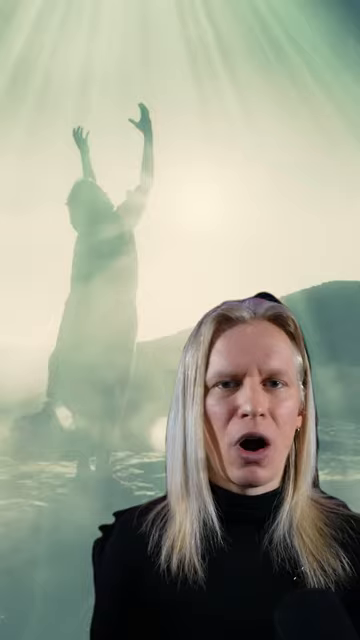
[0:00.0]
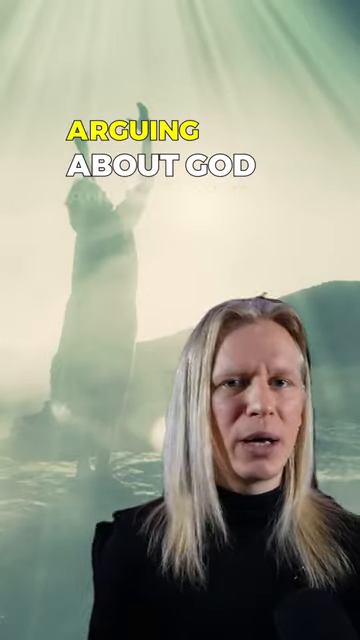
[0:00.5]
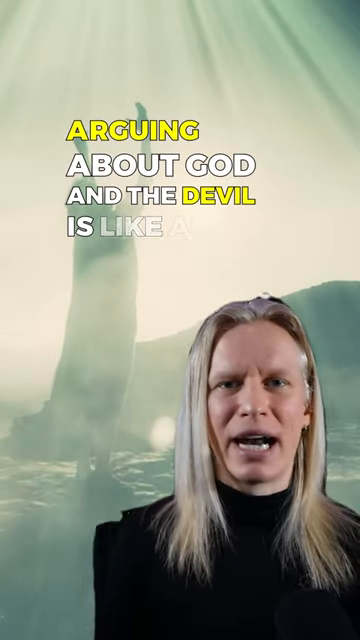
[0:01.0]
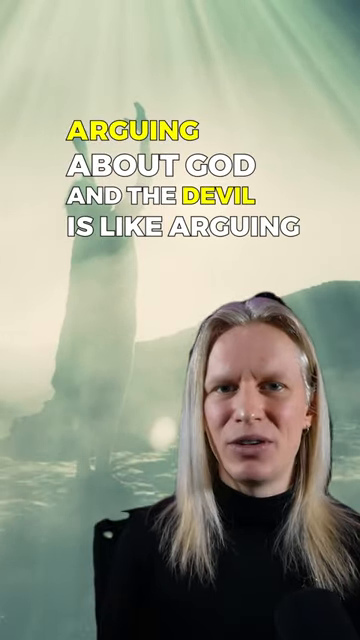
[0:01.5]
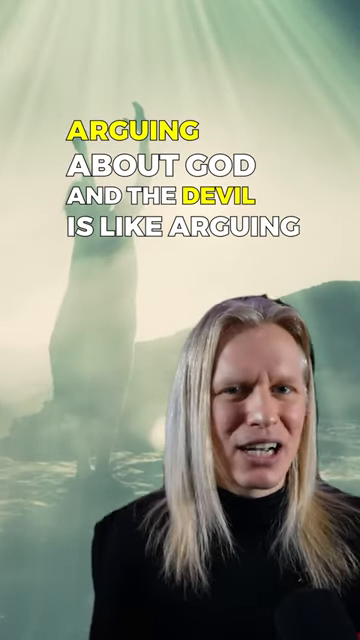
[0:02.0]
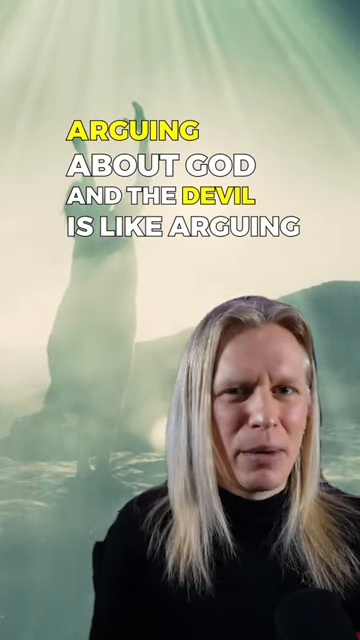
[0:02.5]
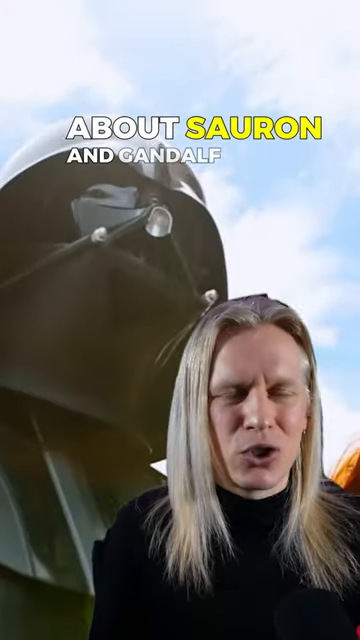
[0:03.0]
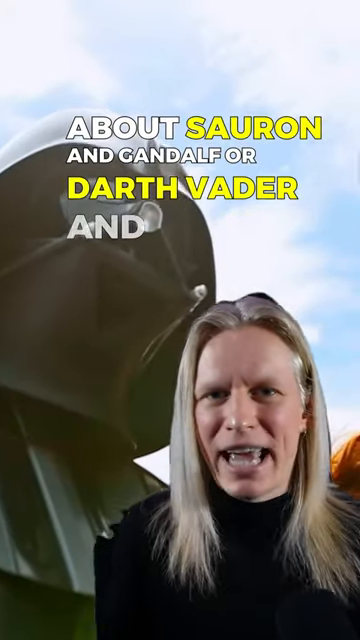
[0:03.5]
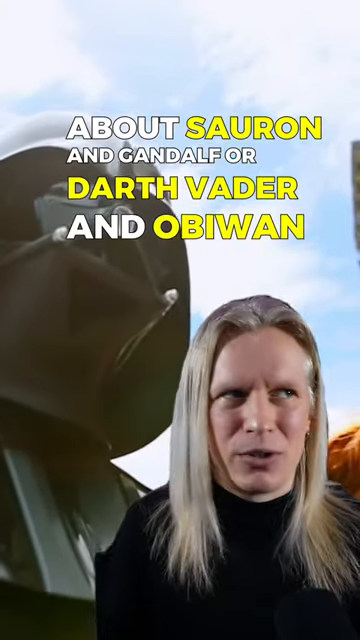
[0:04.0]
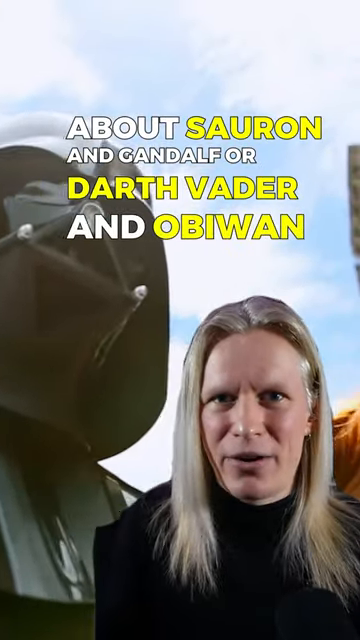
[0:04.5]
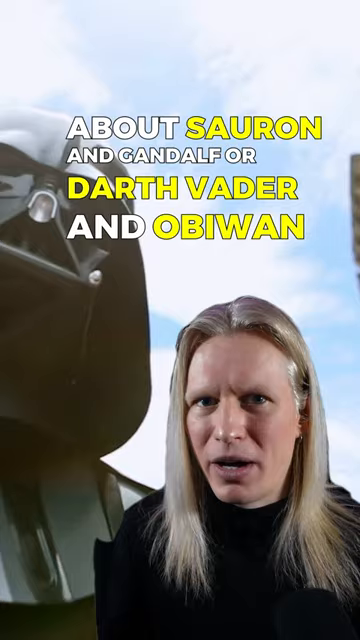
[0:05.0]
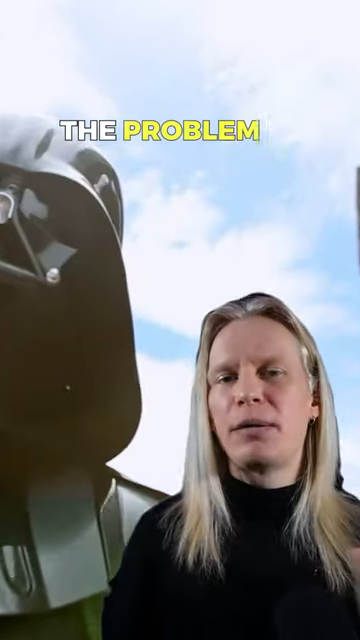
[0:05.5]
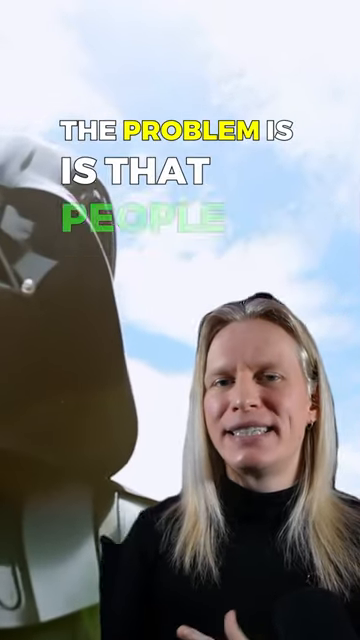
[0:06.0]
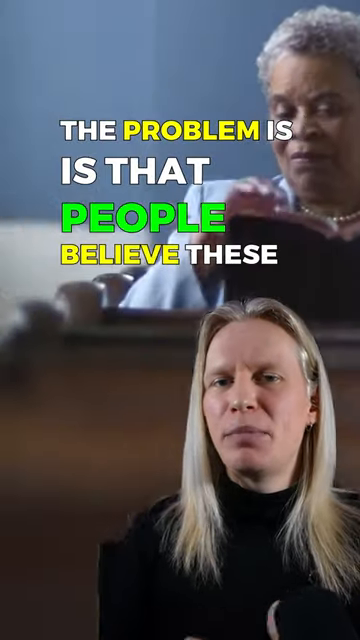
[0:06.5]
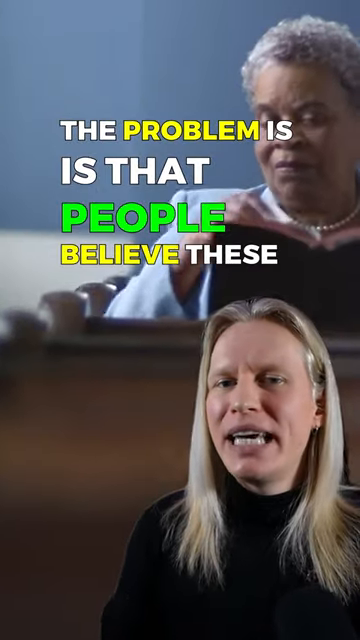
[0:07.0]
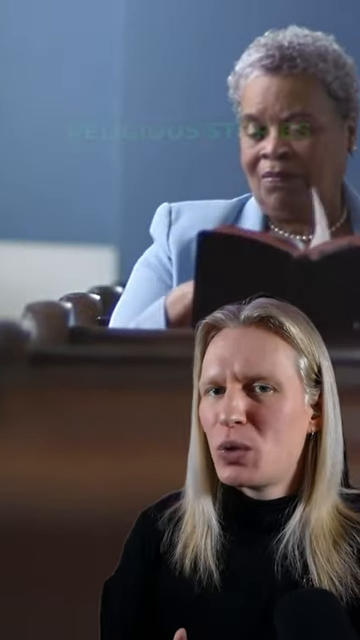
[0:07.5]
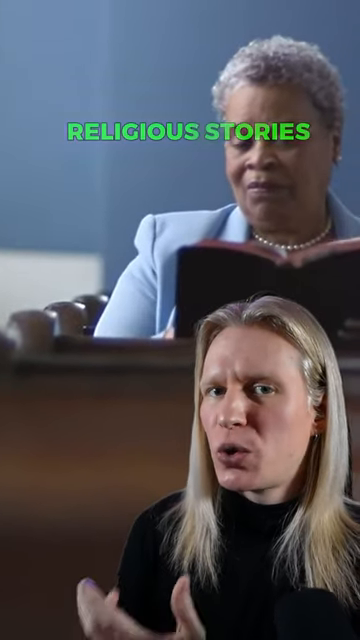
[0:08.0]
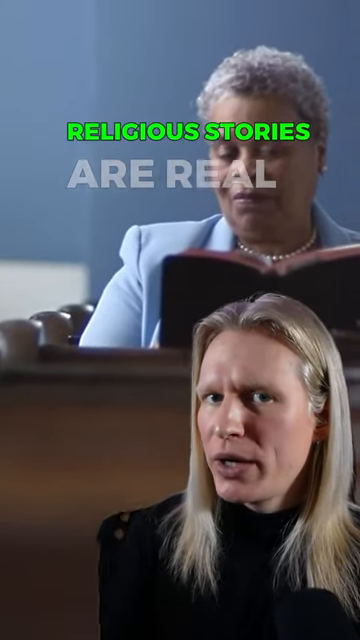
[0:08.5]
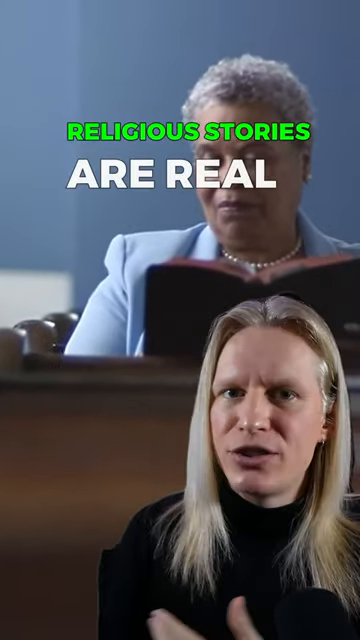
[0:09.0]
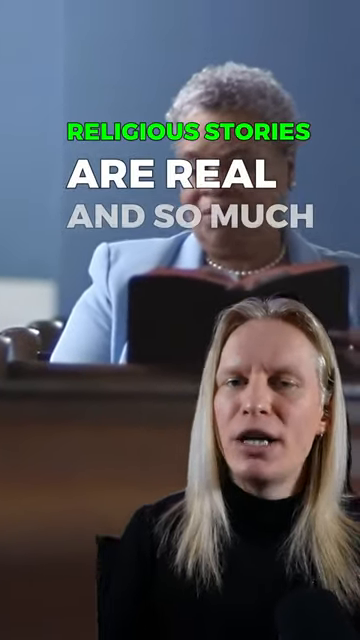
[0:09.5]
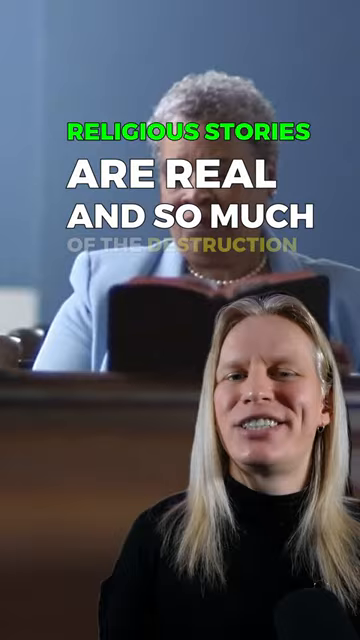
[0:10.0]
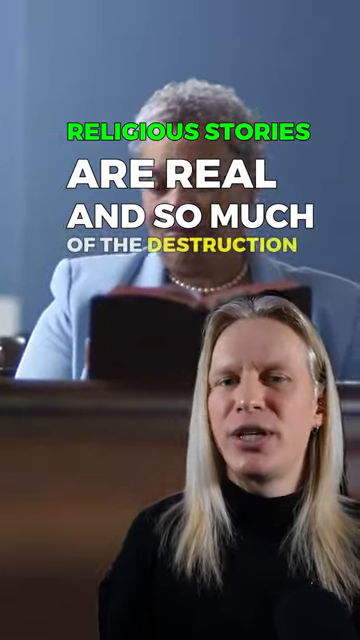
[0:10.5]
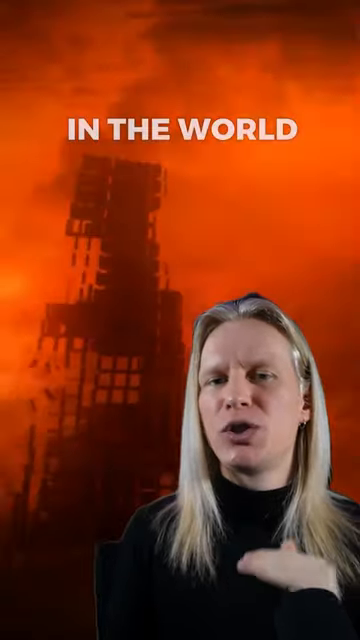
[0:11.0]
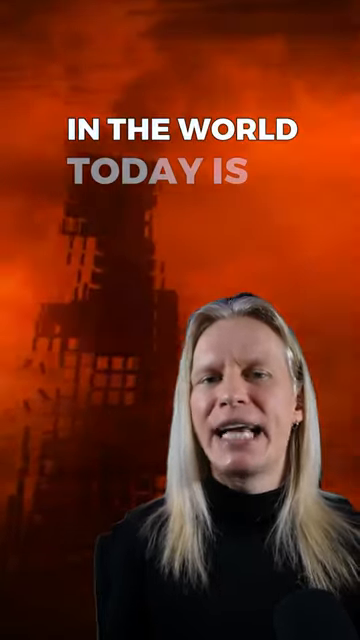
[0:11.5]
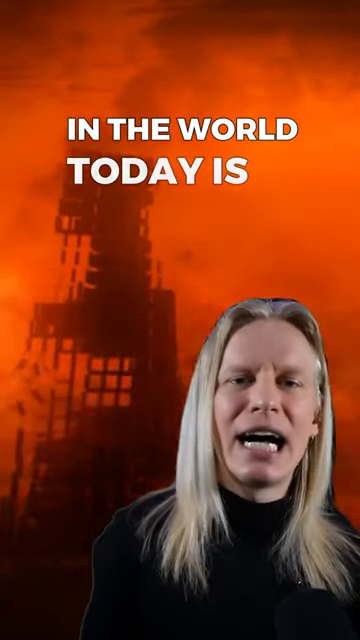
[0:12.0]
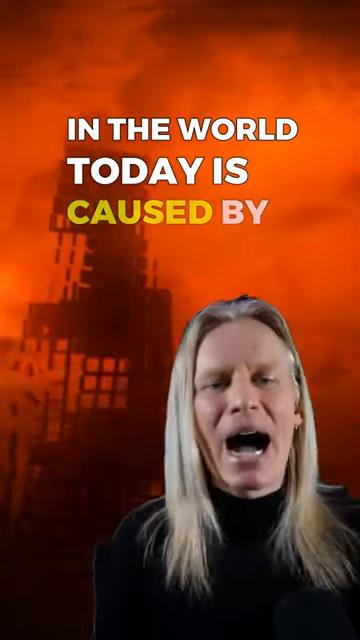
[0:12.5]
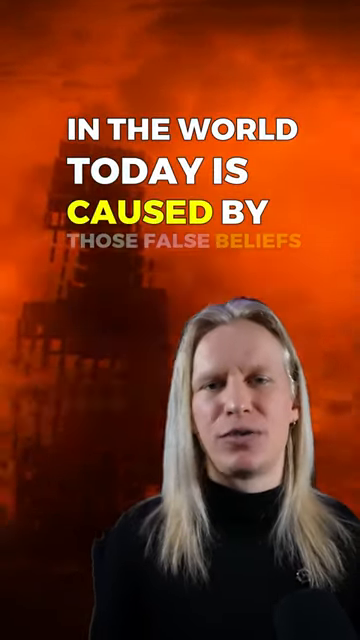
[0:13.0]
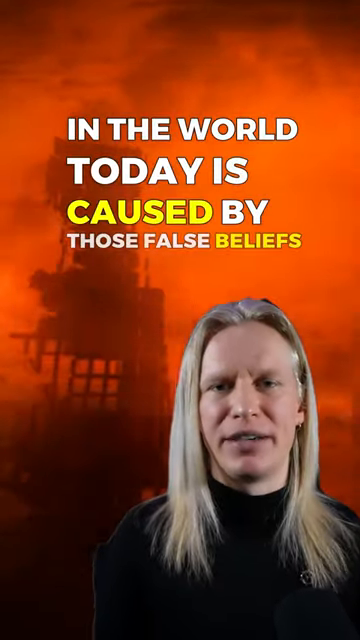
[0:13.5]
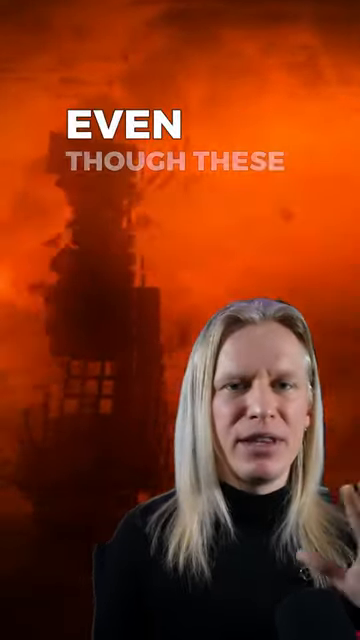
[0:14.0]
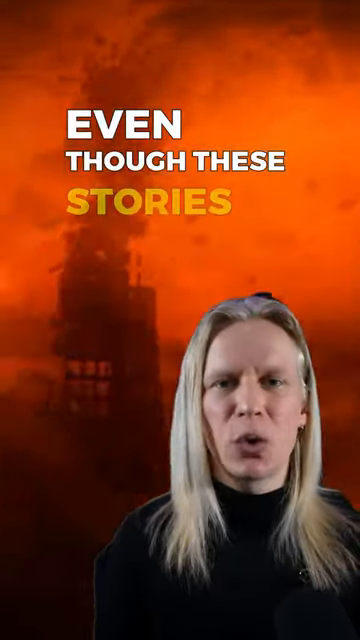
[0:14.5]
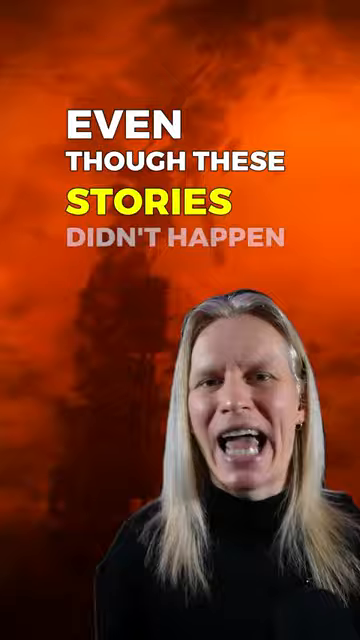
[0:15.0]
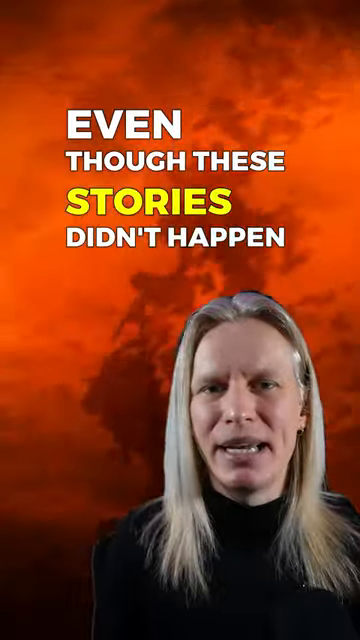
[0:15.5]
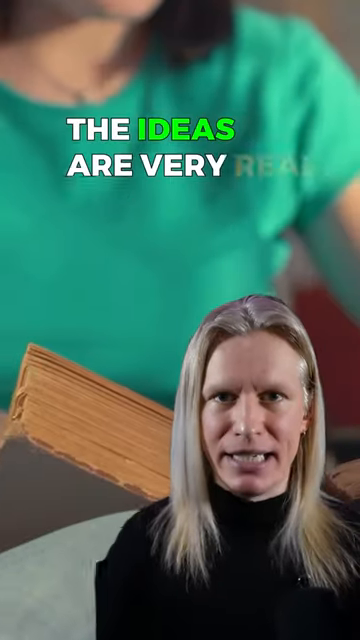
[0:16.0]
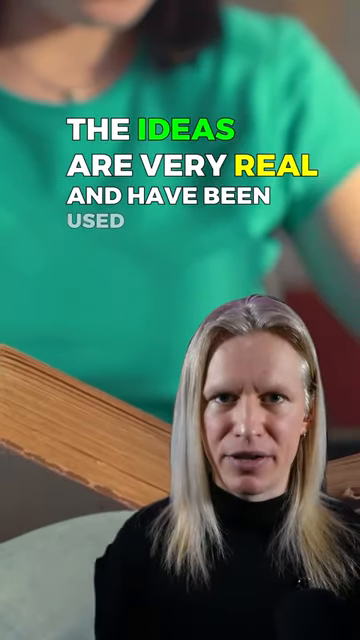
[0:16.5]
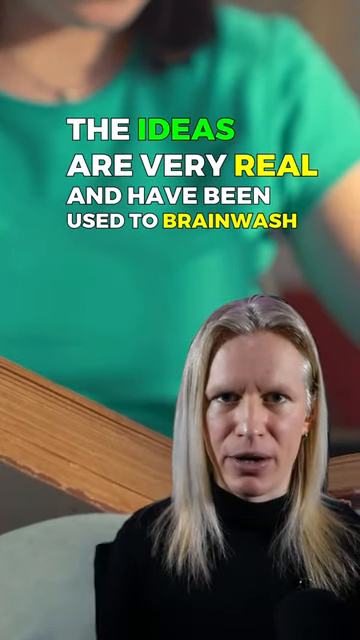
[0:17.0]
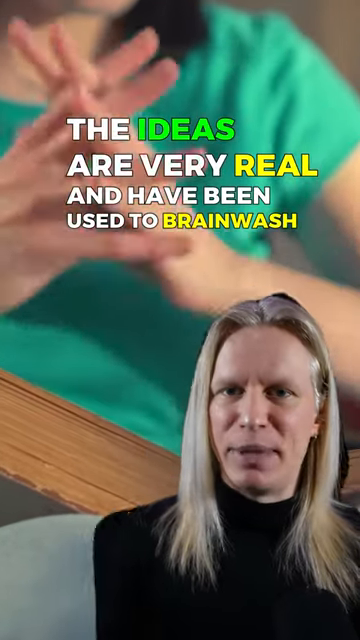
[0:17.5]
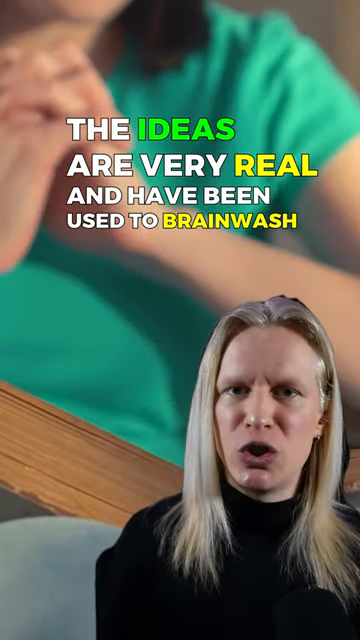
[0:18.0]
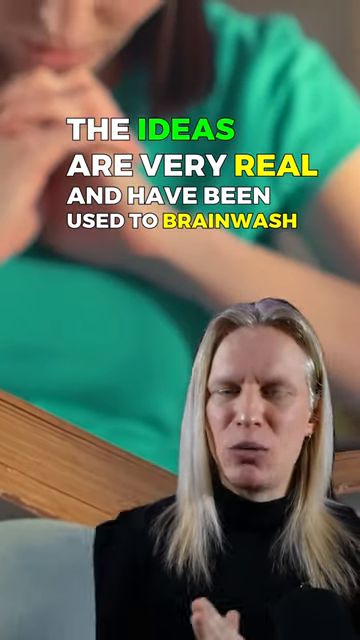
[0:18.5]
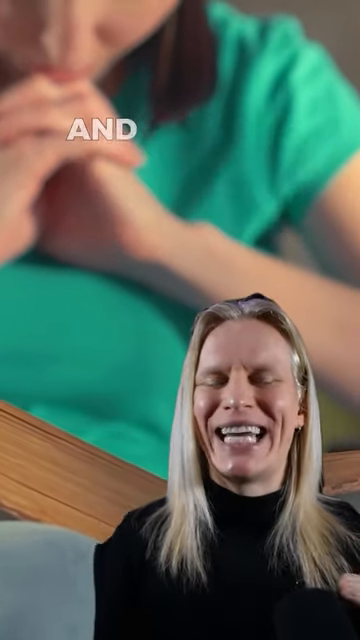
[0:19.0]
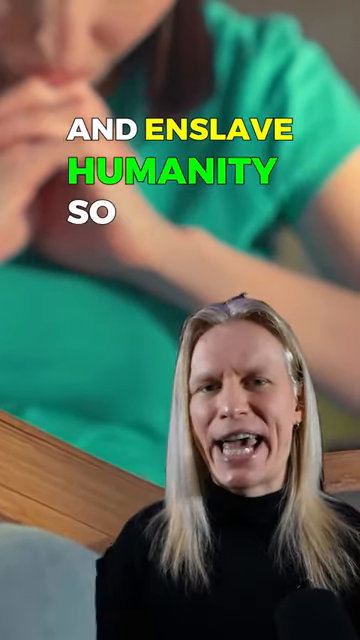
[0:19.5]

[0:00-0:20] A person who appears to be a man, though it is hard to tell, speaks, seemingly to an audience, possibly on social media. He has long blonde hair, looks very passionate about what he is speaking about, and wears a black turtleneck shirt. He is clearly on a green screen, with a background full of religious imagery and symbolism. While he speaks, text on the screen reads "arguing about the God and the devil is like" and continues: "The problem is that people believe these religious stories are real and so much of the destruction in the world today is caused by those false beliefs. Even though these stories didn't happen, the ideas are very real and have been used to brainwash and enslave humanity." The images on the screen include people worshiping and, at one point, a picture of Darth Vader. An older African American woman in a church pew flips pages in the Bible, and then flames appear along with what looks like a nuclear or gas explosion. People praying are also shown.